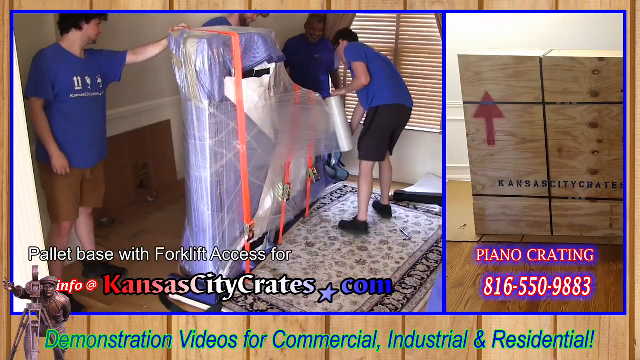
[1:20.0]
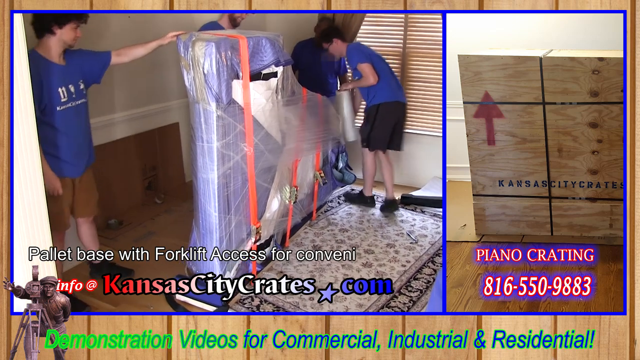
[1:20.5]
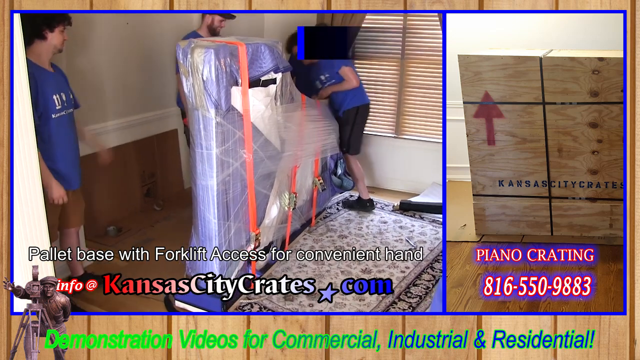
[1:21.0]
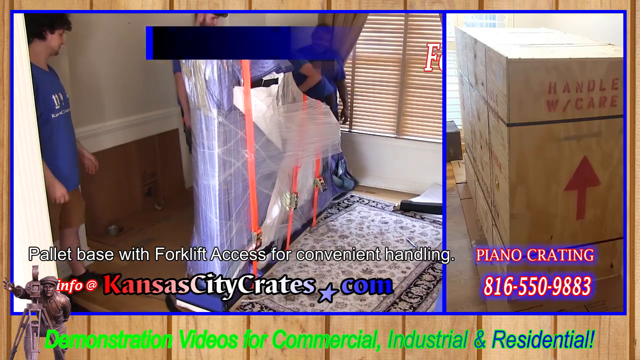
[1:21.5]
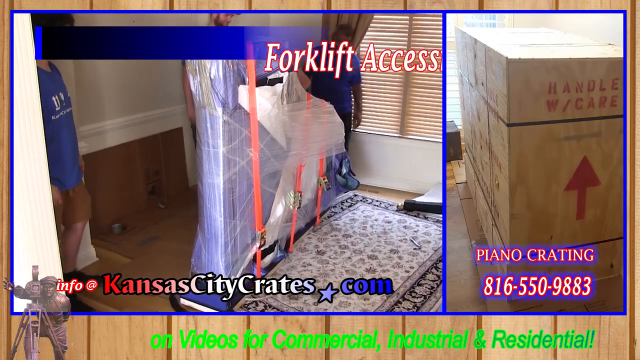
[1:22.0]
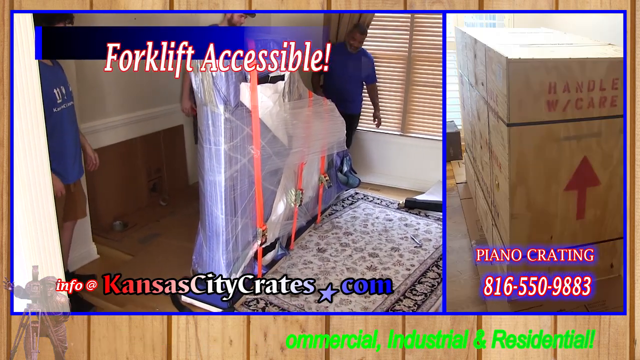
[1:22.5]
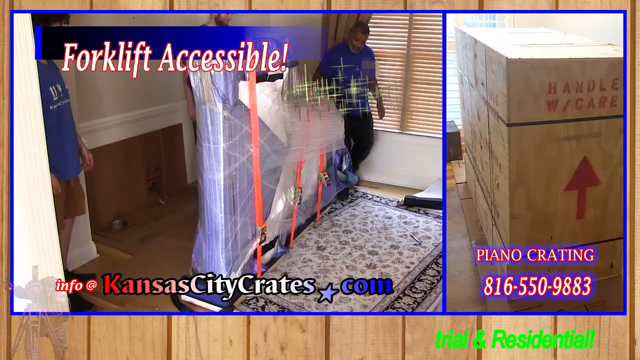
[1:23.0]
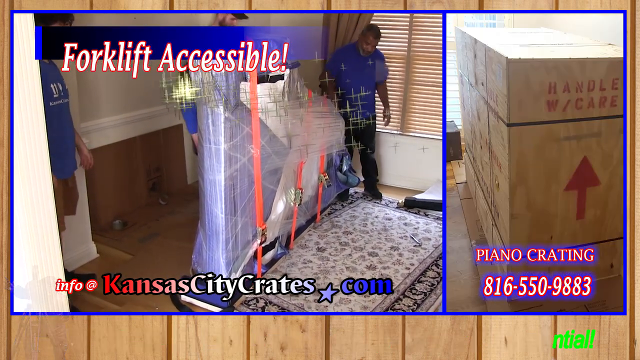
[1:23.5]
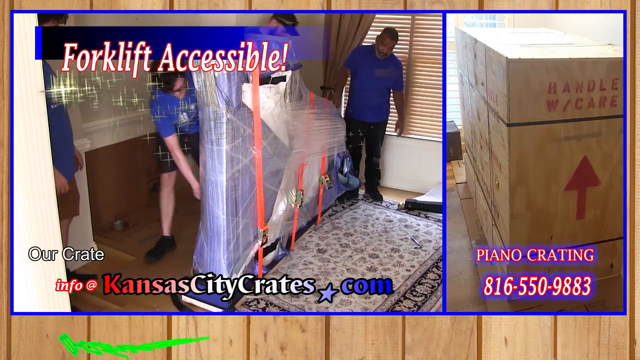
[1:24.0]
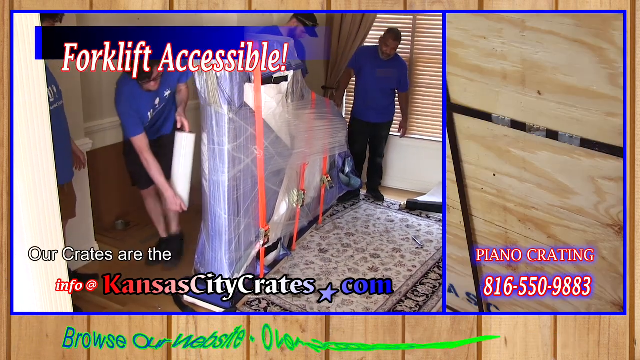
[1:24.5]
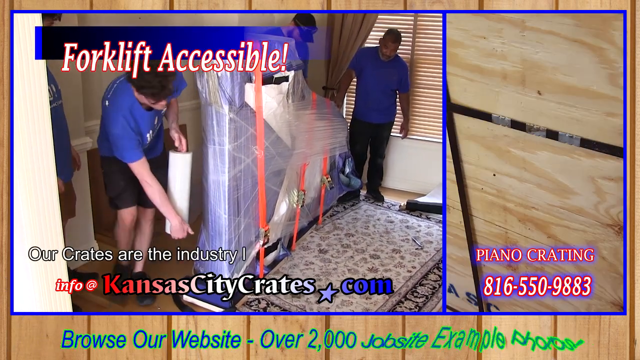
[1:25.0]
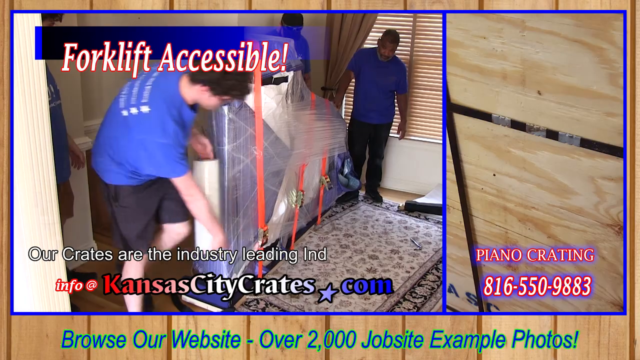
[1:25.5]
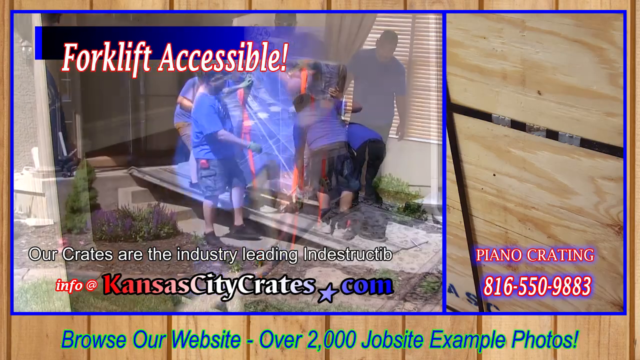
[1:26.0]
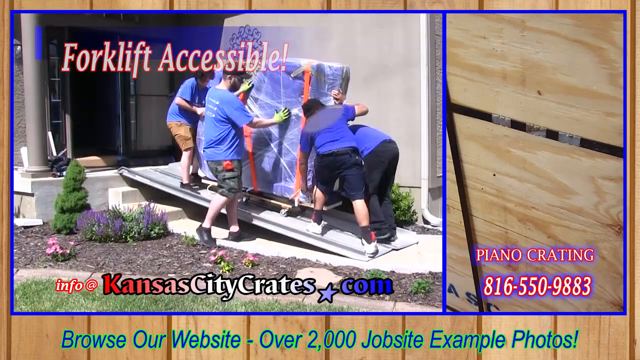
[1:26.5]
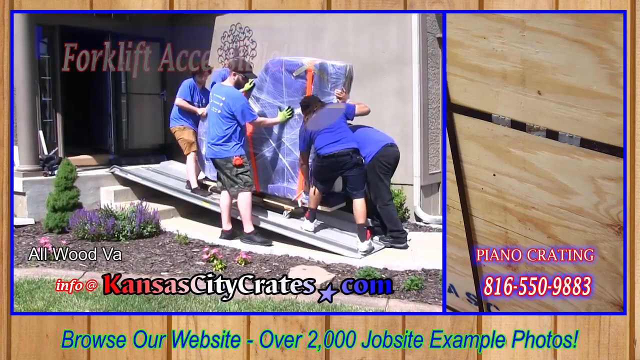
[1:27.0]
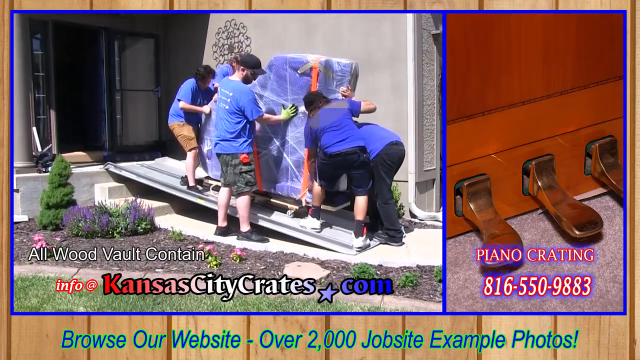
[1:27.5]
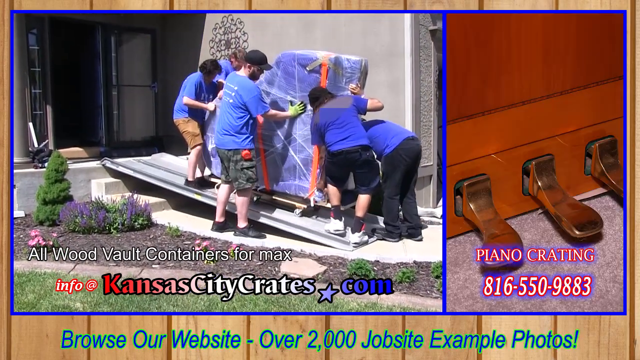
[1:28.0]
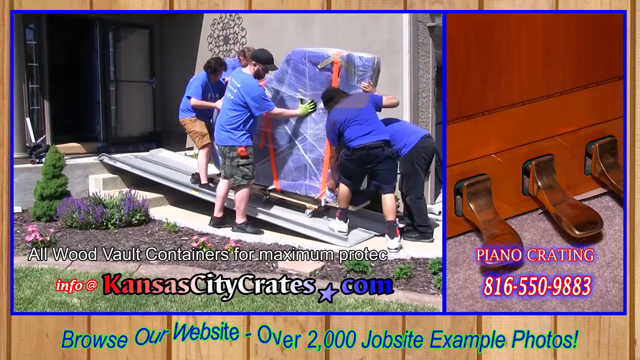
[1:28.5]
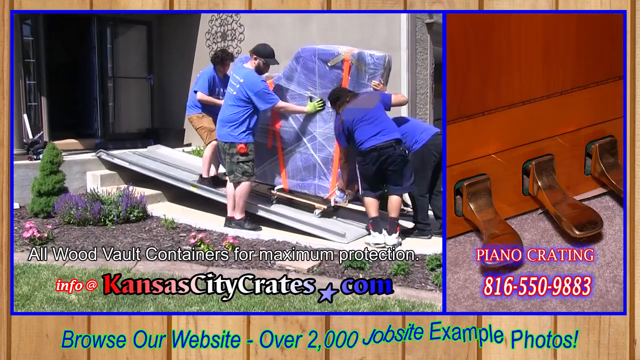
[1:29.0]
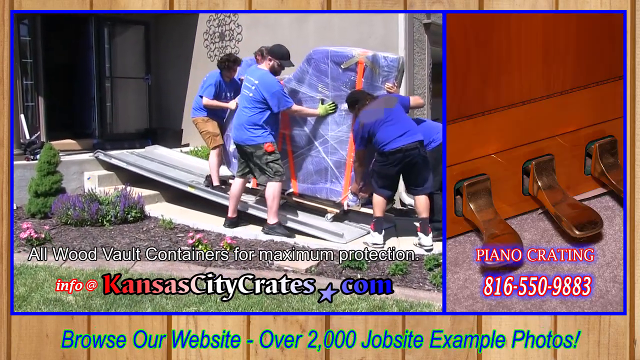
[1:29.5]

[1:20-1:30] Four men in blue shirts continue wrapping the base of the piano with plastic wrap. One man wears khaki shorts, and another wears black shorts with black shoes. Suspension cords, three bright orange strips, keep the piano intact. The man on the right side of the piano wraps the plastic toward the front of the piano and around to the left side. Text at the top reads "forklift accessible!" Five men, all in blue shirts, wheel the base of the piano outside. There are stairs, and they have placed a ramp to make it easier to roll the piano out.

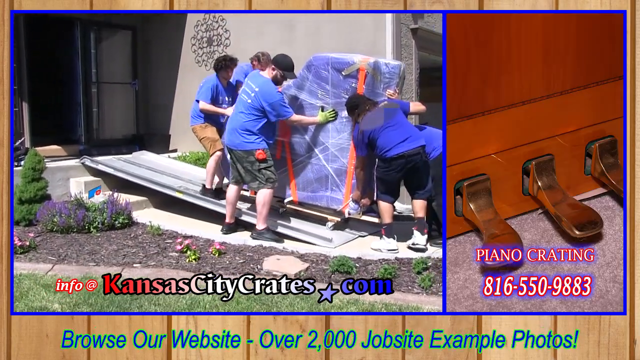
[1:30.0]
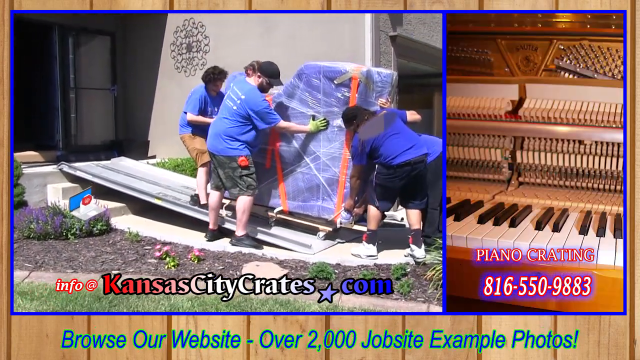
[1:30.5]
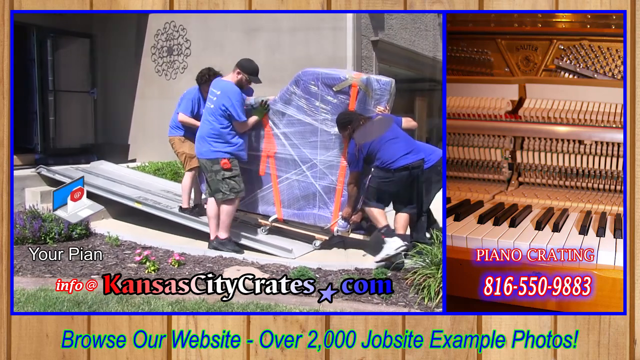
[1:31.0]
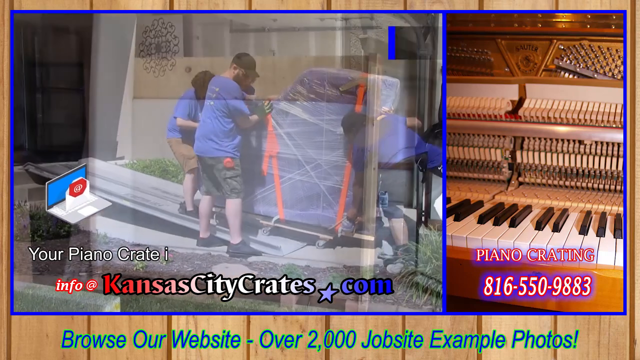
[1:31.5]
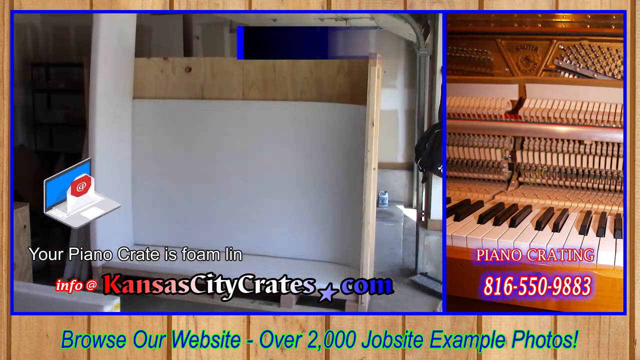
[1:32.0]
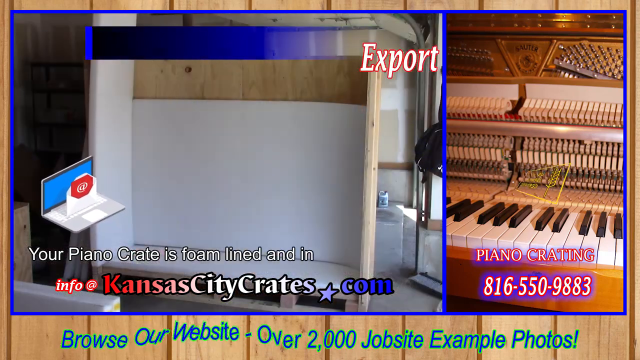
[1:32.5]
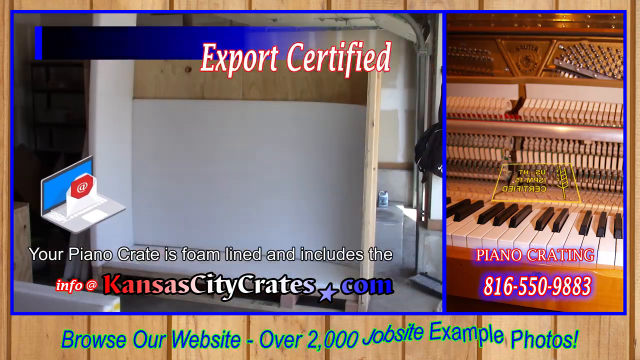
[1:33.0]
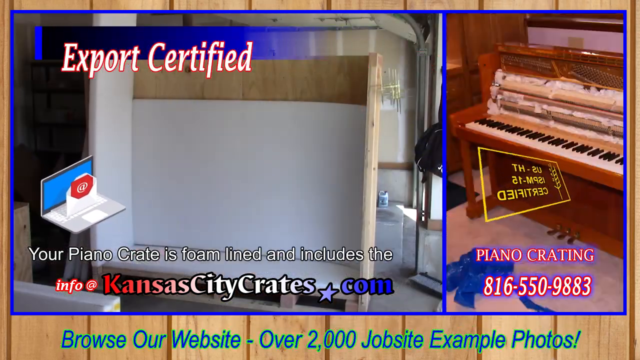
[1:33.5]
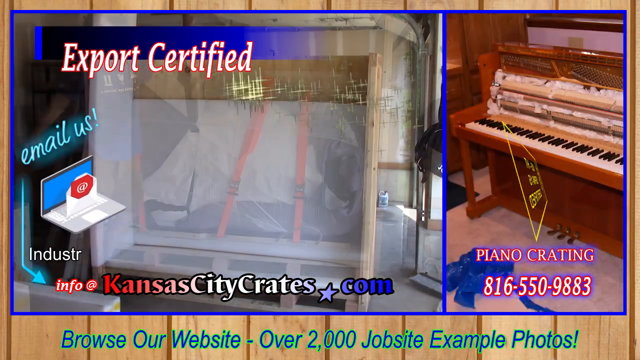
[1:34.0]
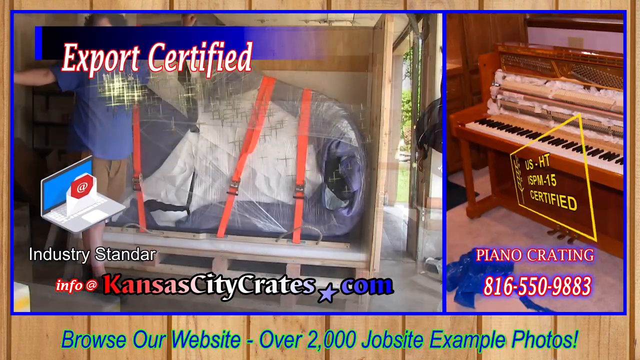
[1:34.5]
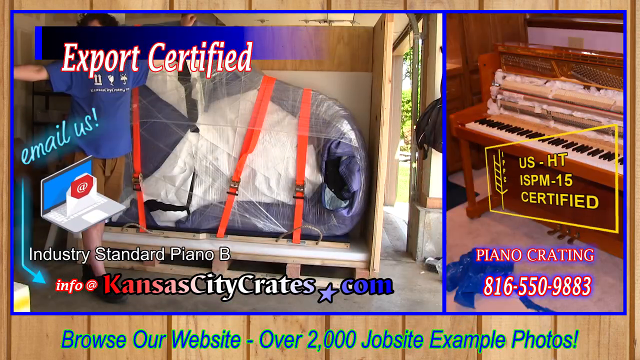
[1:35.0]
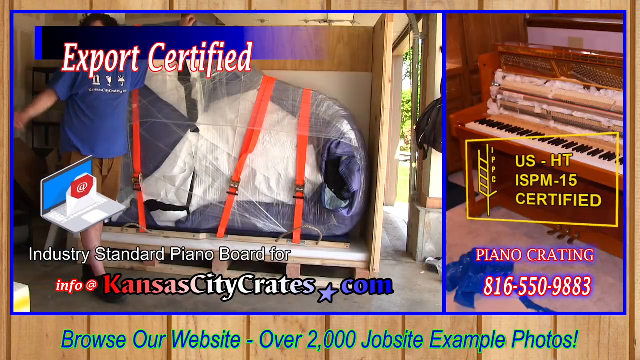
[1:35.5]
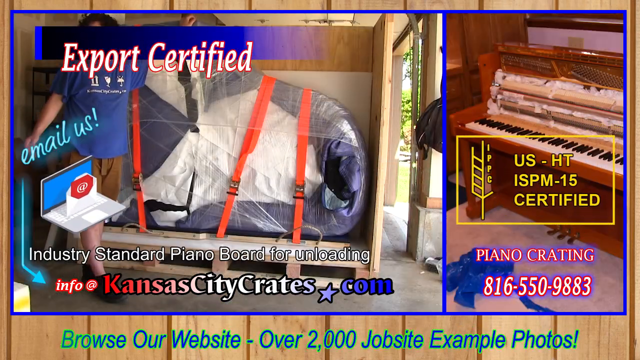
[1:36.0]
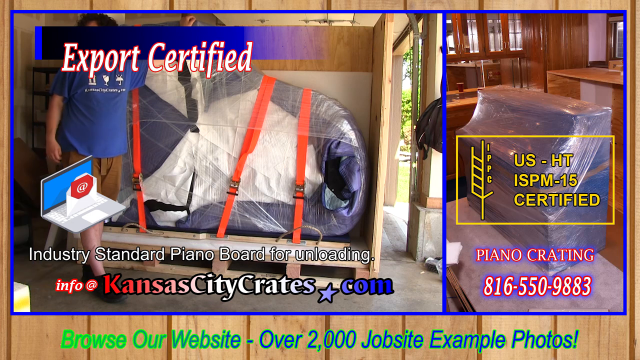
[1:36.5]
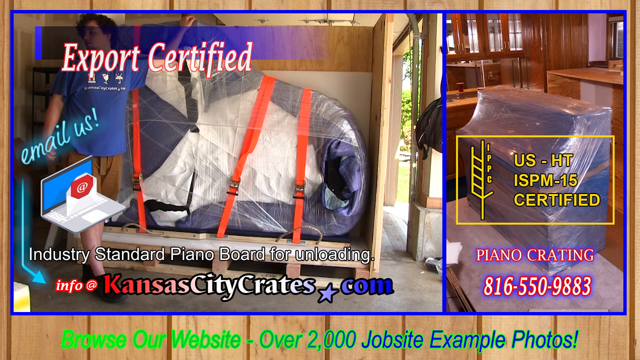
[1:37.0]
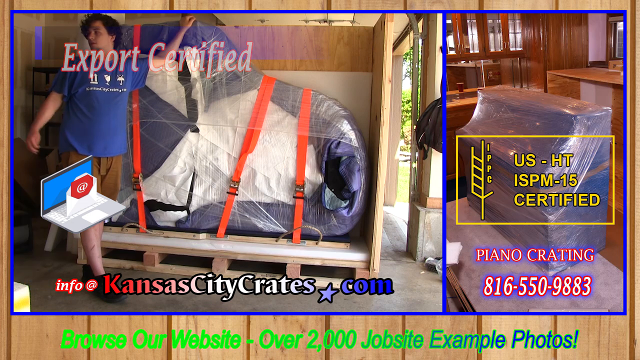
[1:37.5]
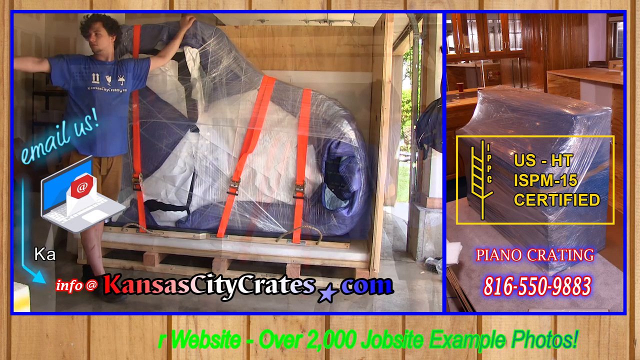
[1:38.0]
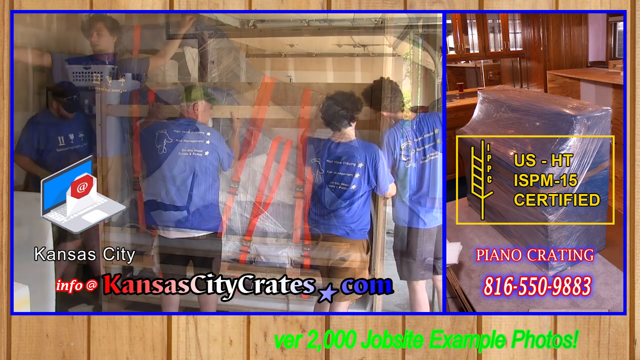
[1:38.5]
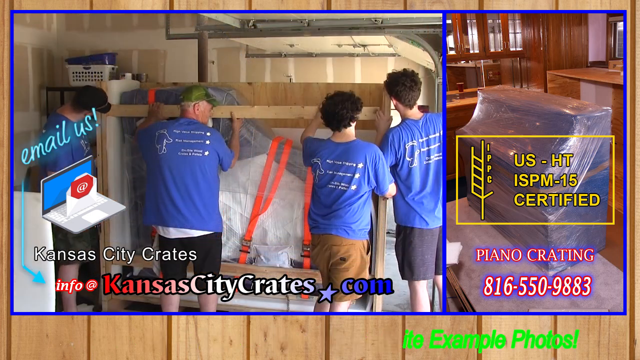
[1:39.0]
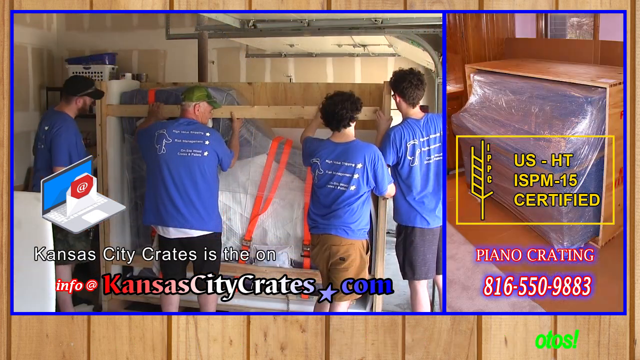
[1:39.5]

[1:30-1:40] The five men in blue shirts roll the piano down the ramp until it reaches the ground. An image shows an empty crate inside a garage, with text reading "your piano crate is foam lined and includes the industry standard piano board for unloading." Next, a man in a blue shirt and khaki pants is shown with the piano inside the open crate. A cartoon-style laptop is on the left with the text "Email us!" above it. Four men in blue shirts then package the piano into the crate.